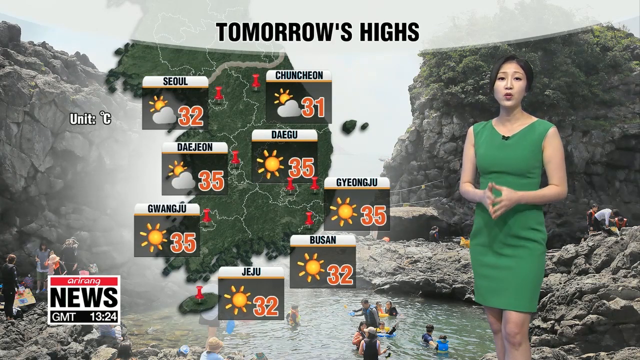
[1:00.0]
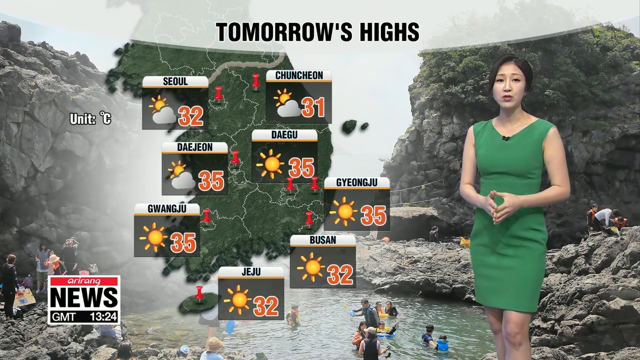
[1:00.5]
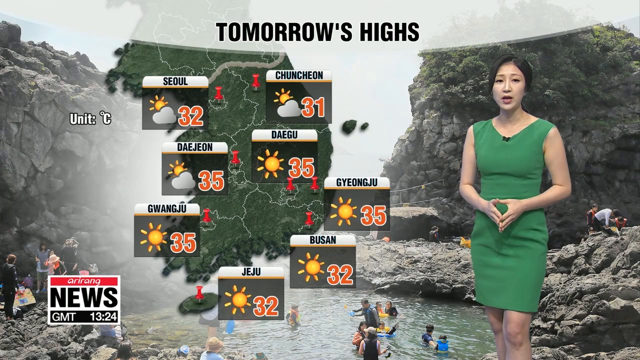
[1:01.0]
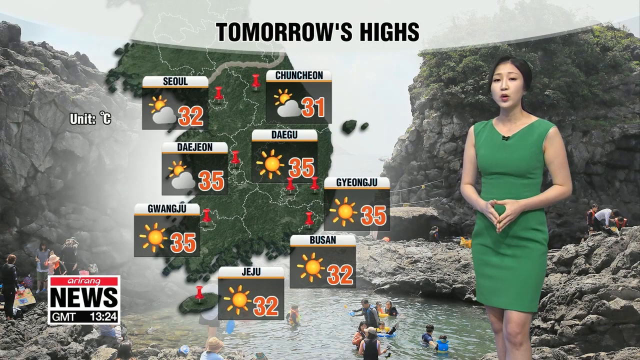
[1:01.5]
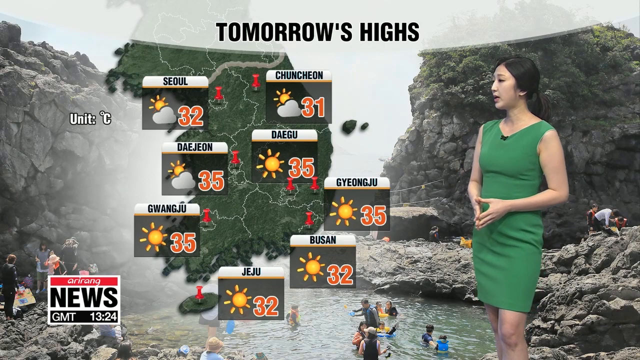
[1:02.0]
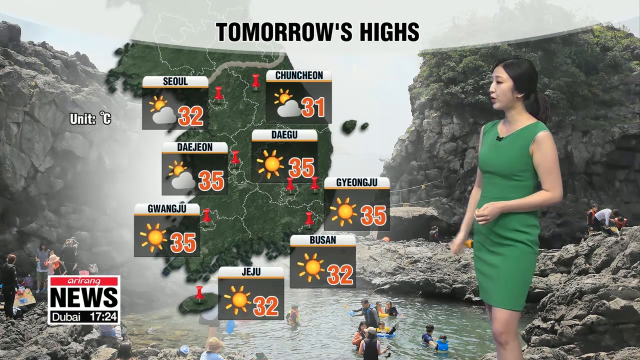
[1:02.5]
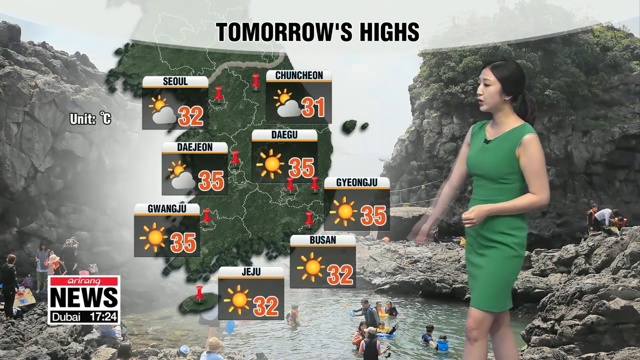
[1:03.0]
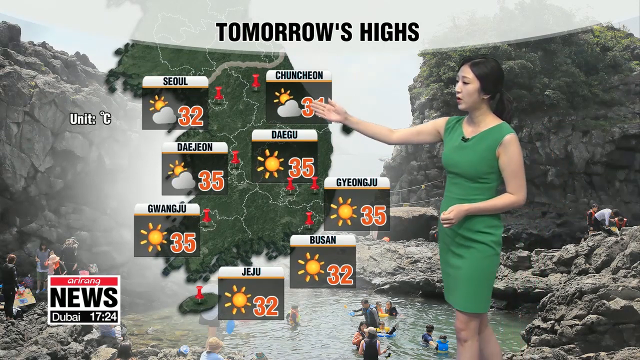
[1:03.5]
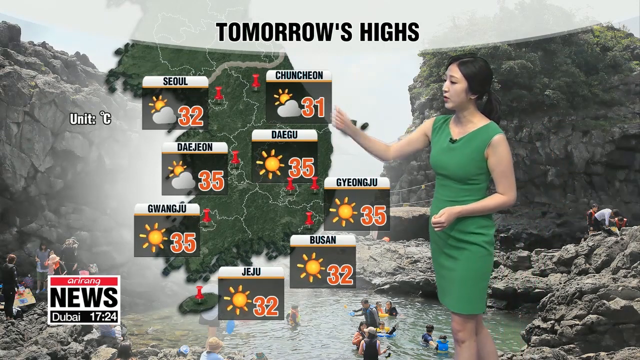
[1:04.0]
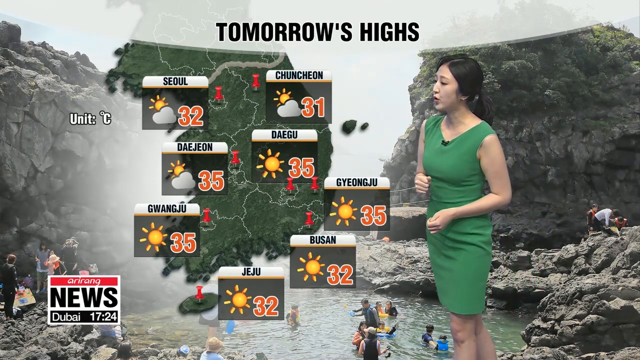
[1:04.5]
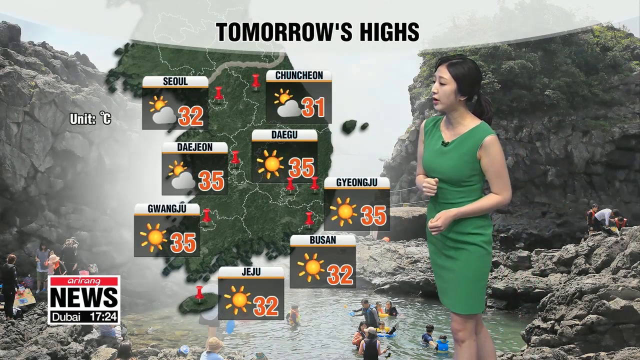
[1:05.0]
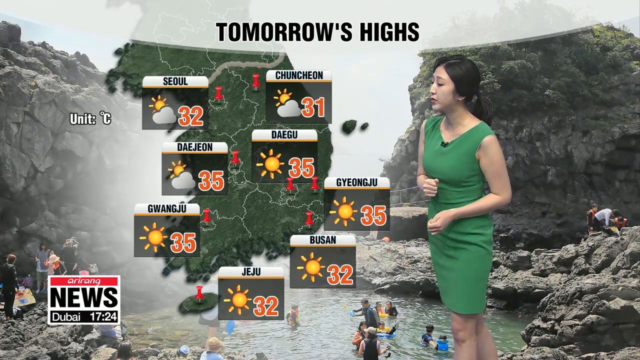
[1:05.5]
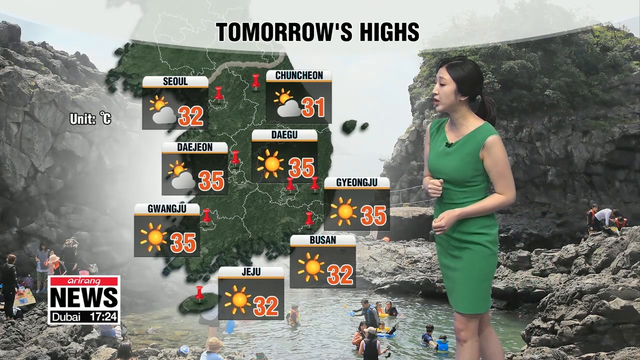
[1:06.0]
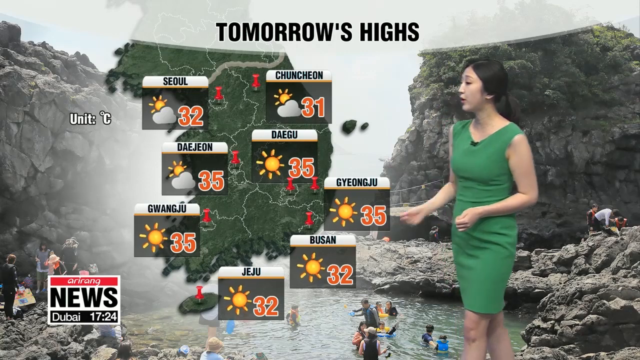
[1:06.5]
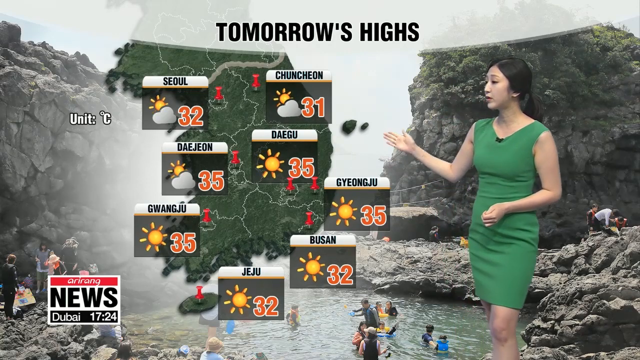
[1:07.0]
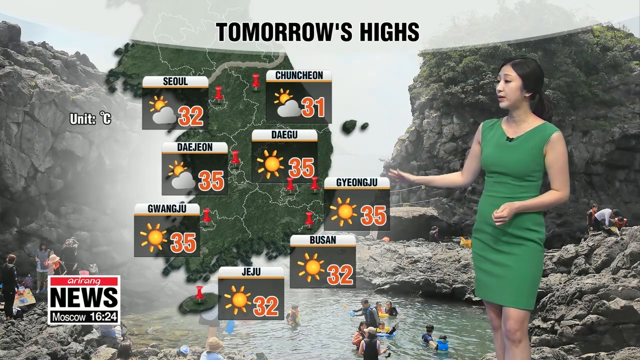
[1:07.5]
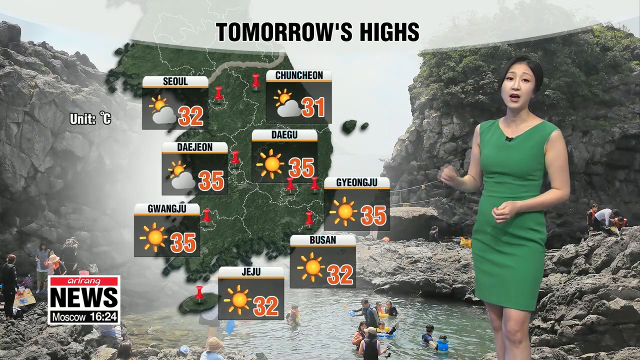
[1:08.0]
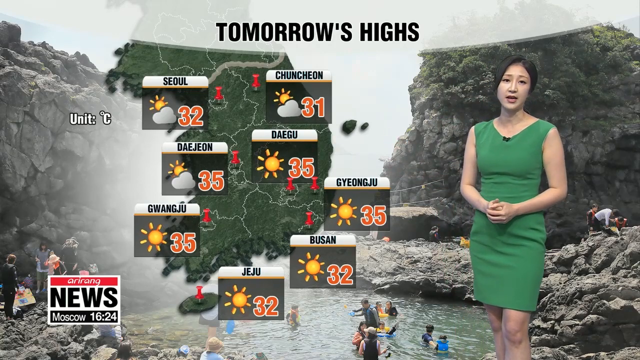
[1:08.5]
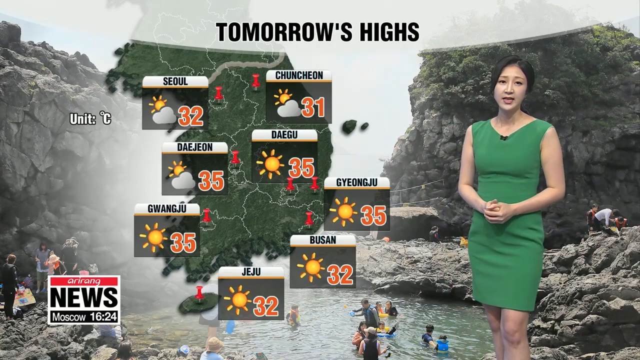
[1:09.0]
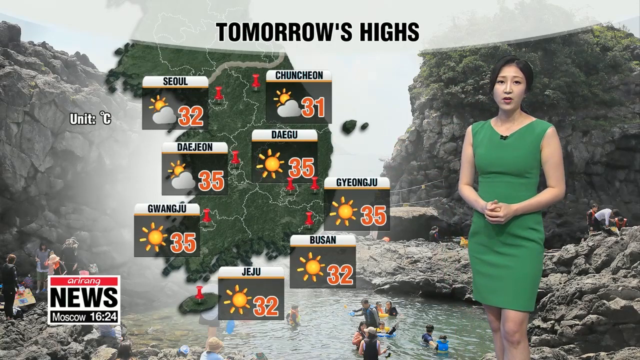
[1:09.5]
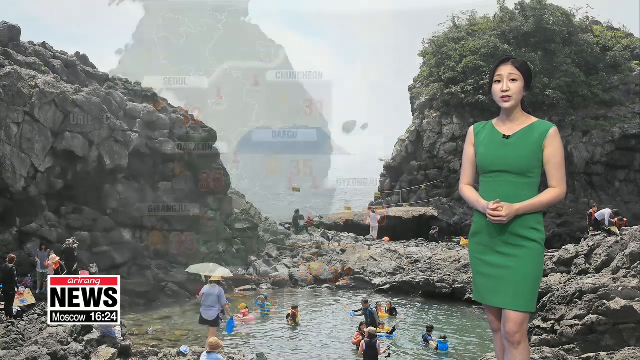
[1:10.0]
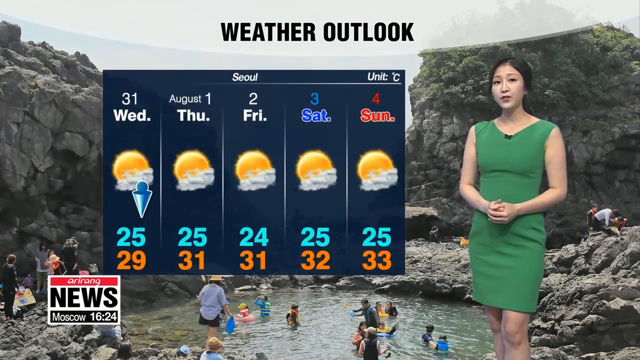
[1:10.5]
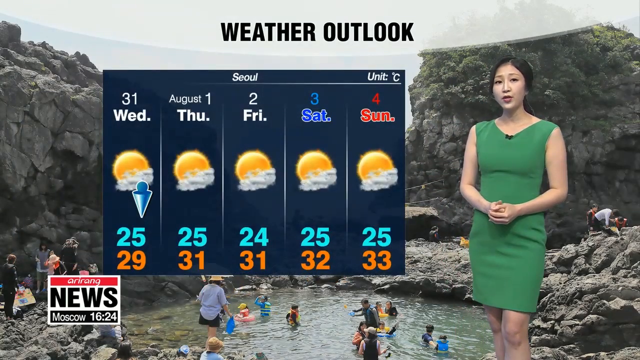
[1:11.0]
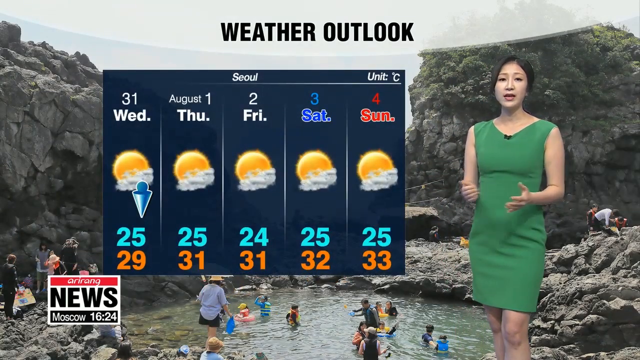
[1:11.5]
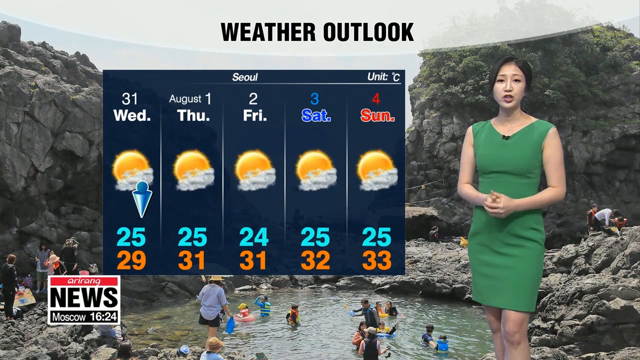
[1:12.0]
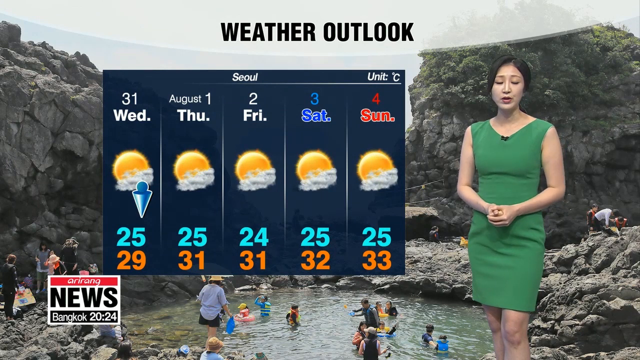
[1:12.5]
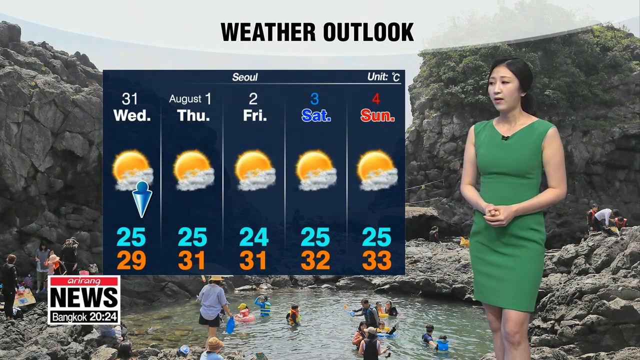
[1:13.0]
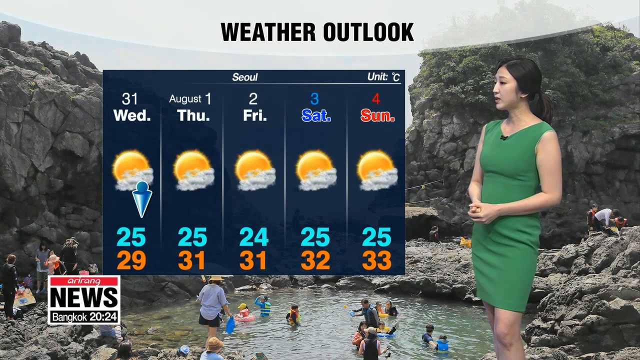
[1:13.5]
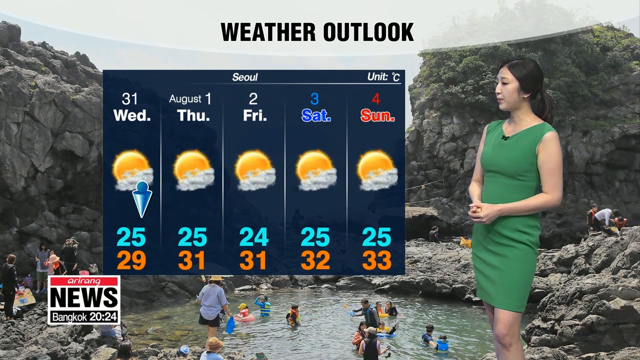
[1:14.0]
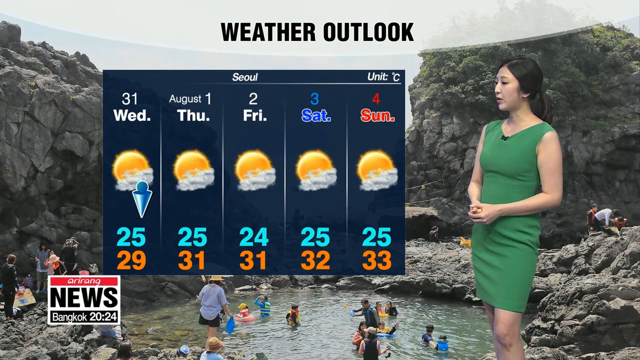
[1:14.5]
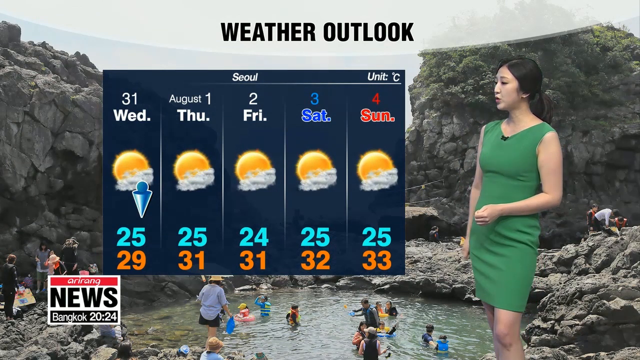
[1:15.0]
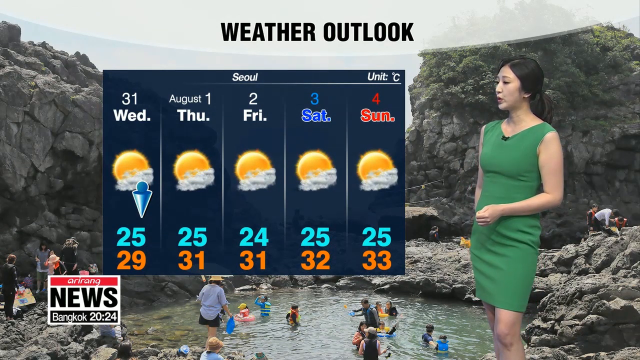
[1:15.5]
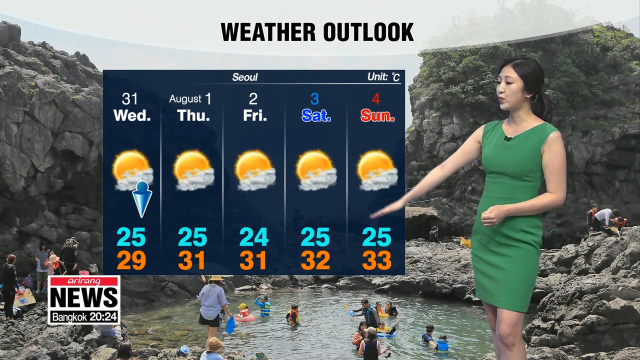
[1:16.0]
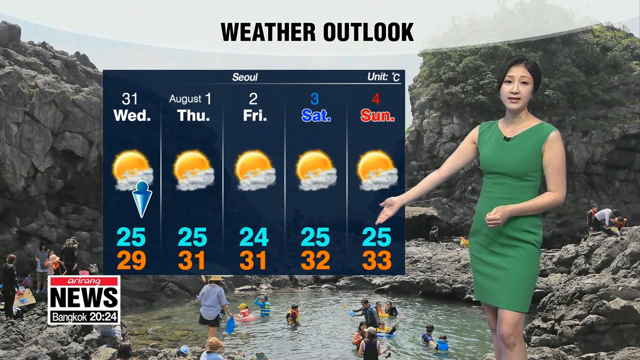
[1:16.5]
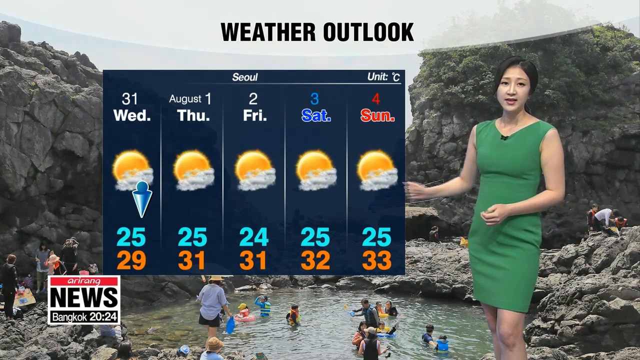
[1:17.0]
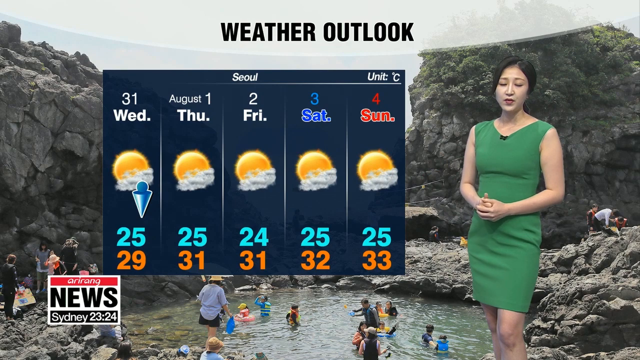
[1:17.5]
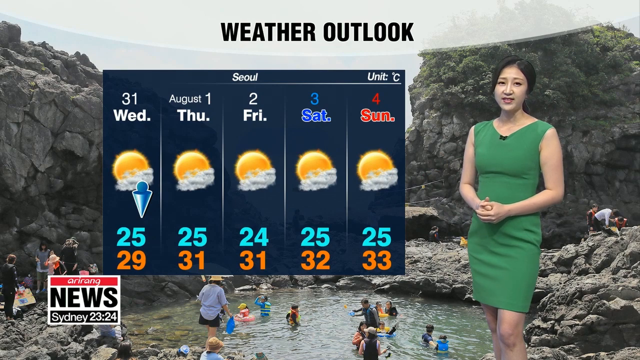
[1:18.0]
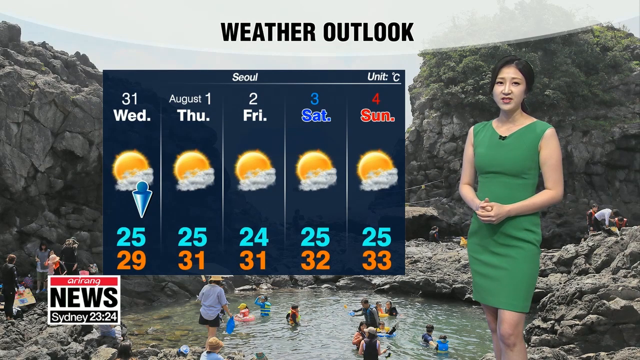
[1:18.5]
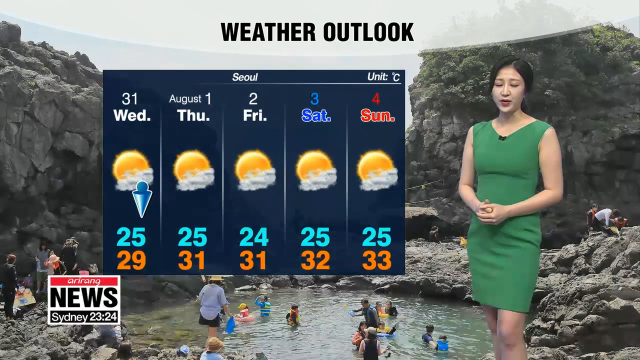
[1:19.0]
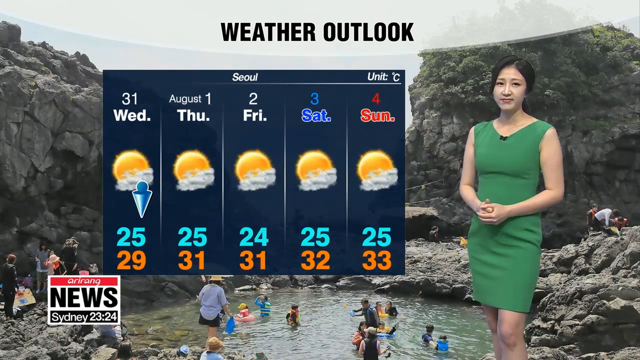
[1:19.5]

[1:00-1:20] The reporter points to the weather chart with her hand. A weather outlook chart then appears on the screen, showing days: Wednesday the 31st, Thursday the 1st, Friday the 2nd, and Saturday and Sunday. Wednesday shows 25 over 9 degrees and Thursday 25 over 31 degrees; another day shows 25 over what is possibly 30. The lady keeps using her hand to indicate each day. She continues the report, going through each place and moving her hand as she points at the weather charts.